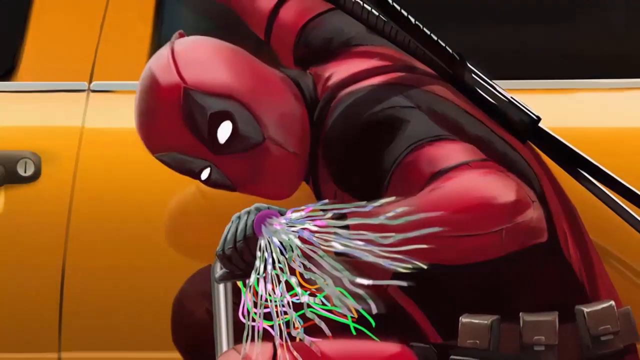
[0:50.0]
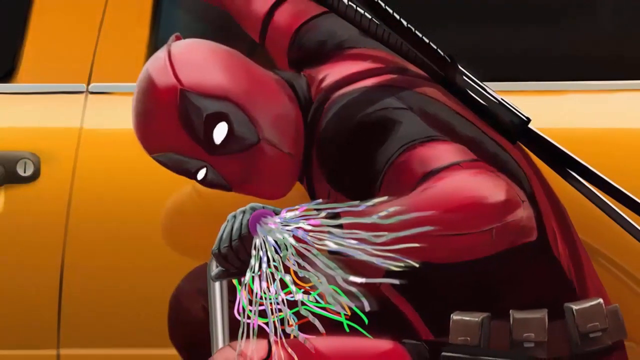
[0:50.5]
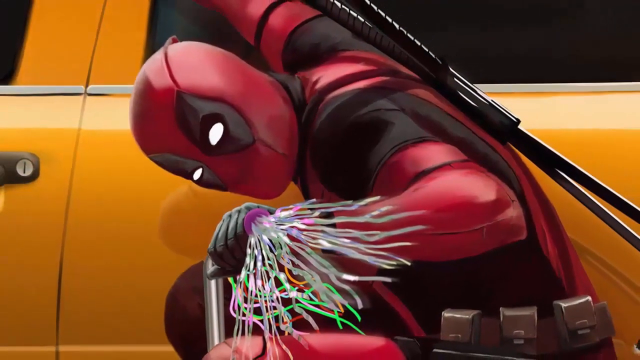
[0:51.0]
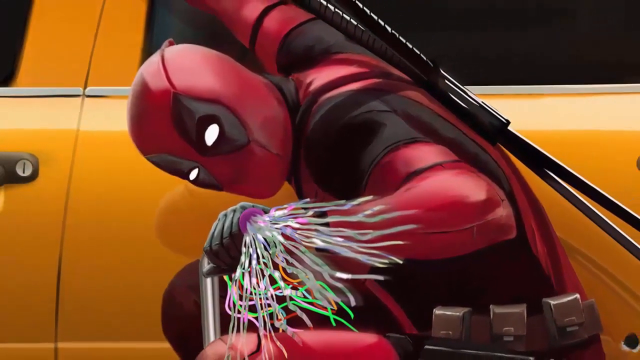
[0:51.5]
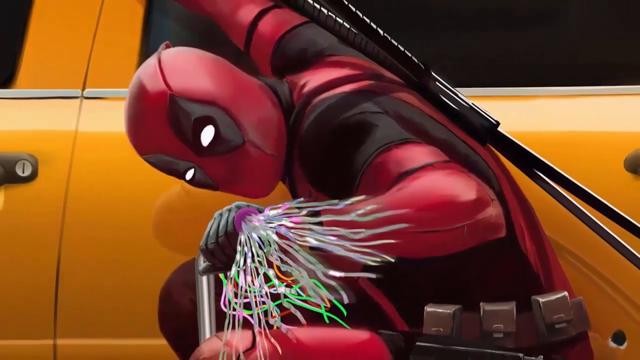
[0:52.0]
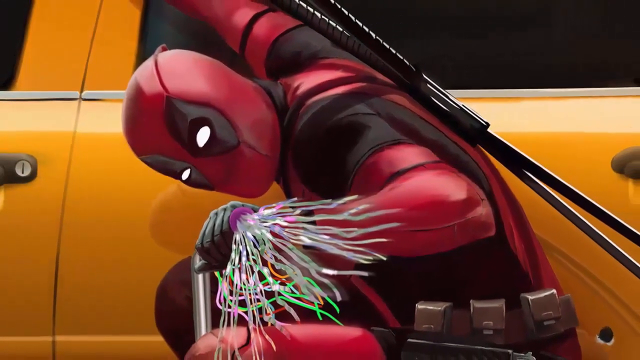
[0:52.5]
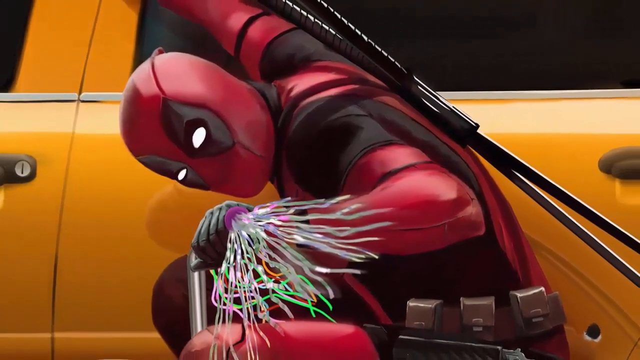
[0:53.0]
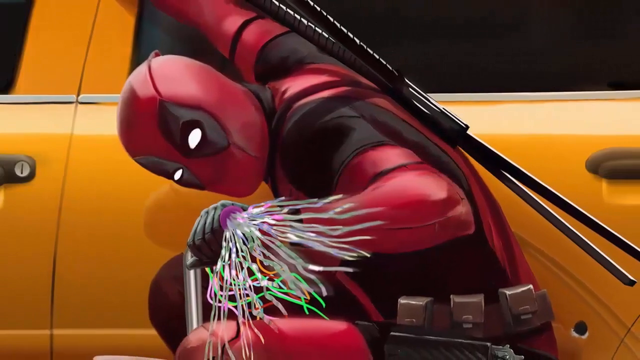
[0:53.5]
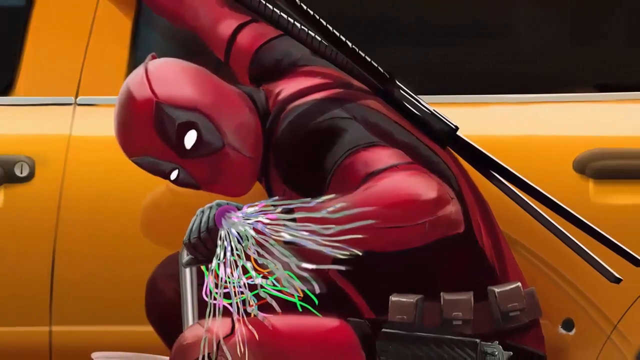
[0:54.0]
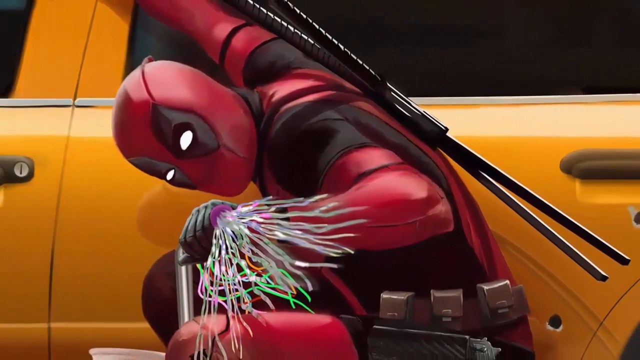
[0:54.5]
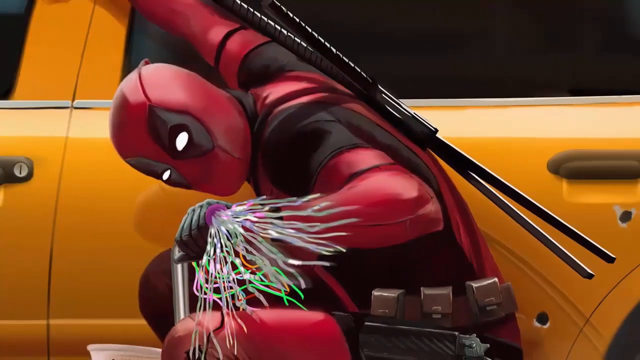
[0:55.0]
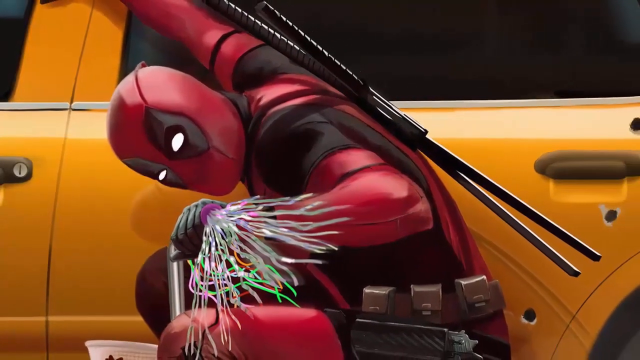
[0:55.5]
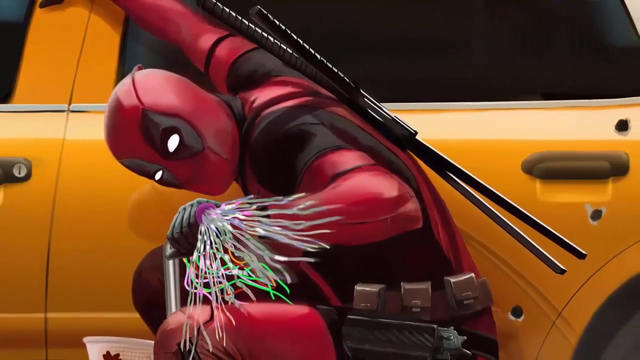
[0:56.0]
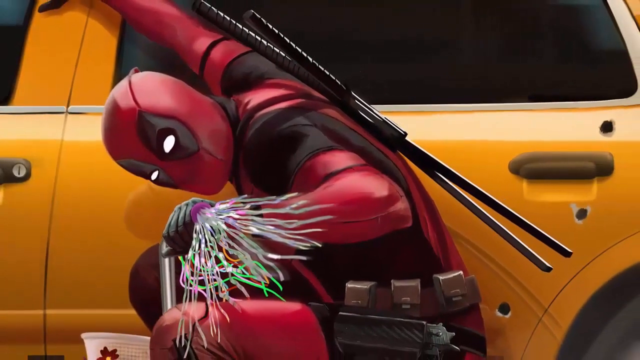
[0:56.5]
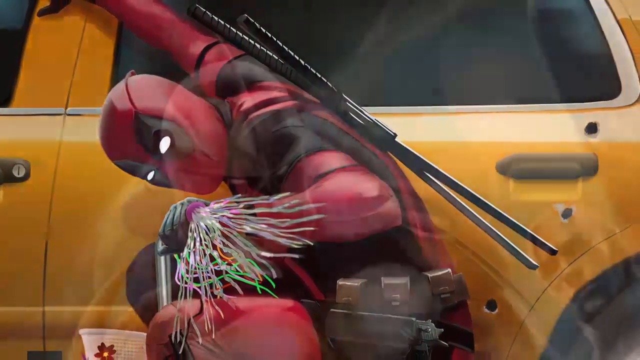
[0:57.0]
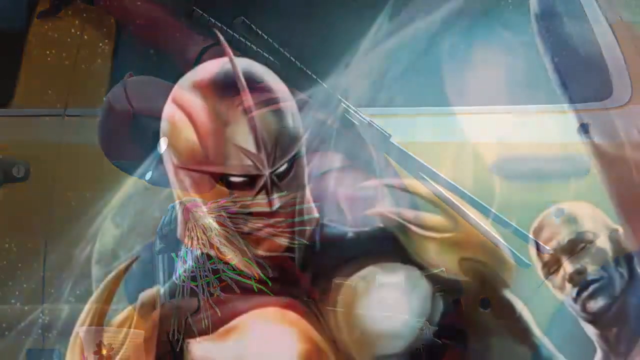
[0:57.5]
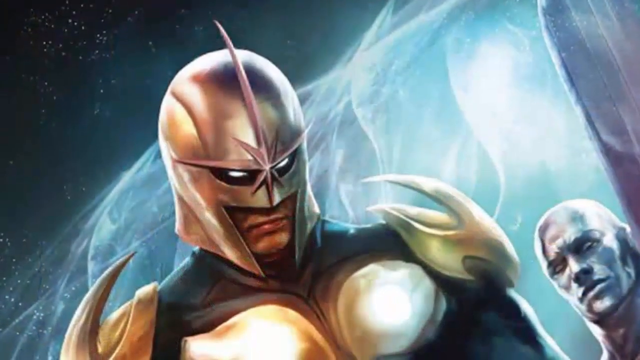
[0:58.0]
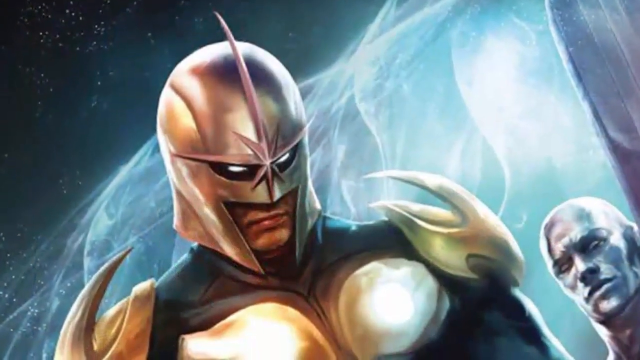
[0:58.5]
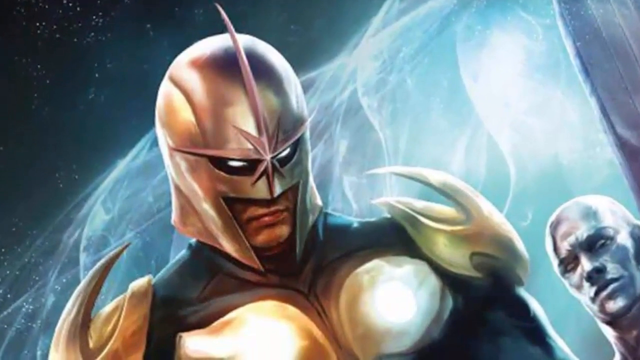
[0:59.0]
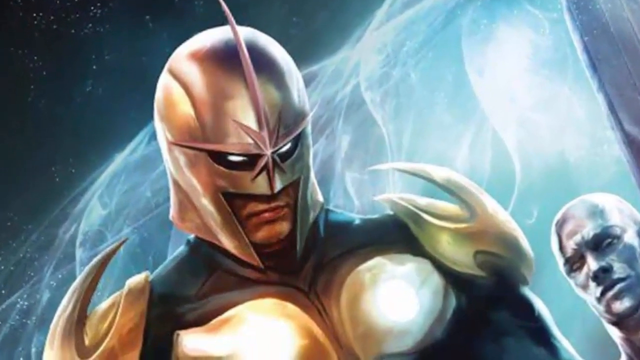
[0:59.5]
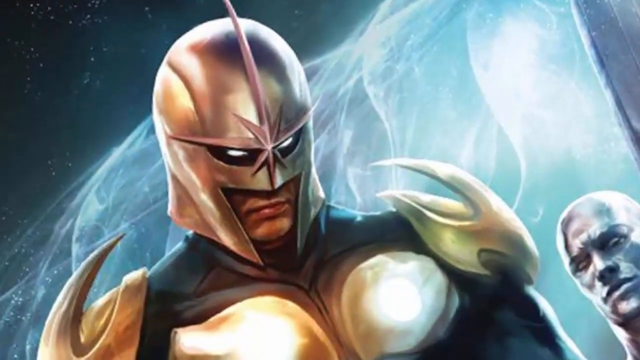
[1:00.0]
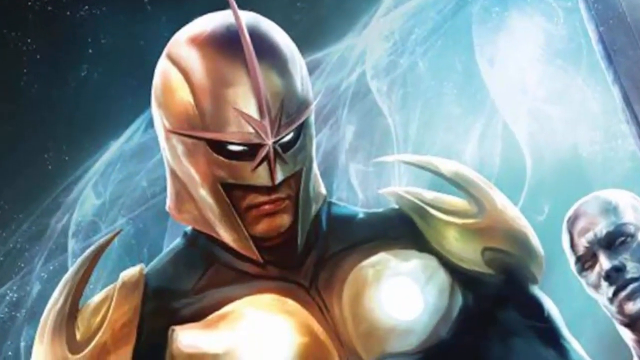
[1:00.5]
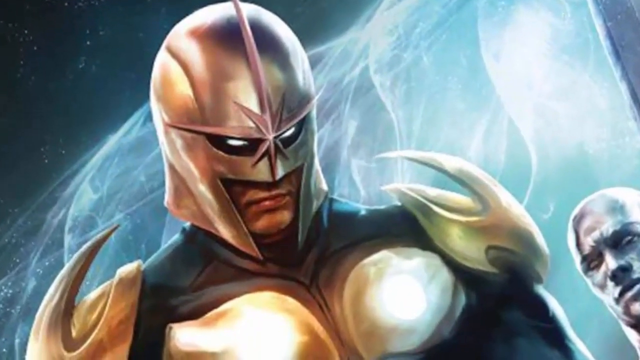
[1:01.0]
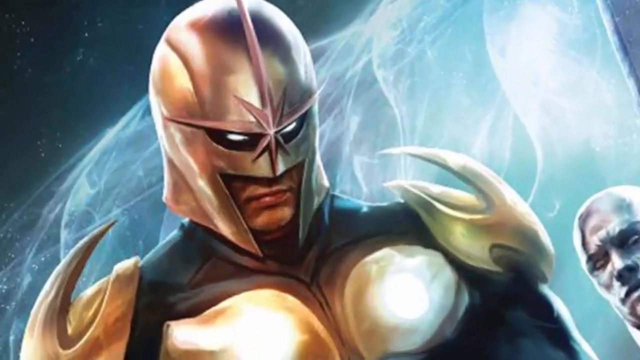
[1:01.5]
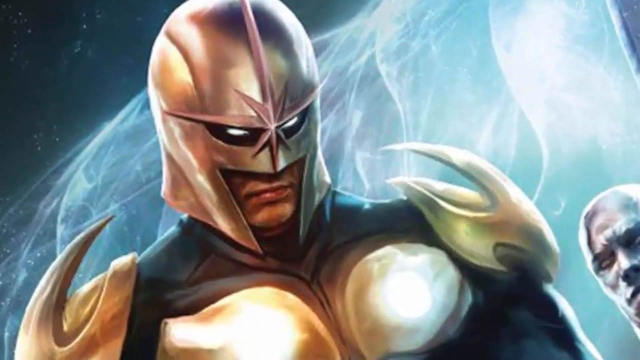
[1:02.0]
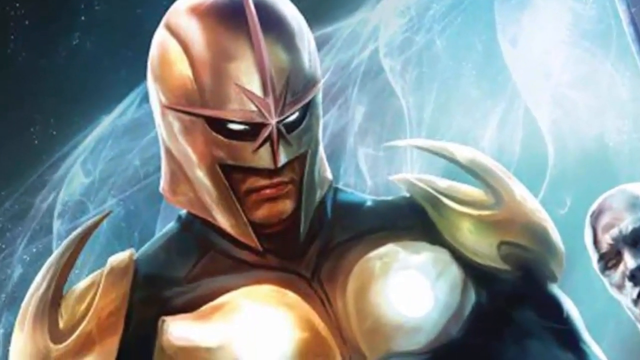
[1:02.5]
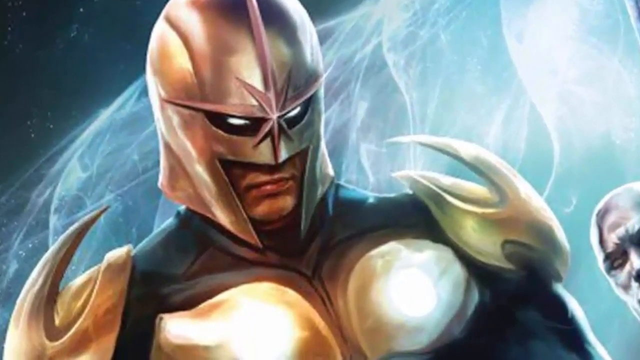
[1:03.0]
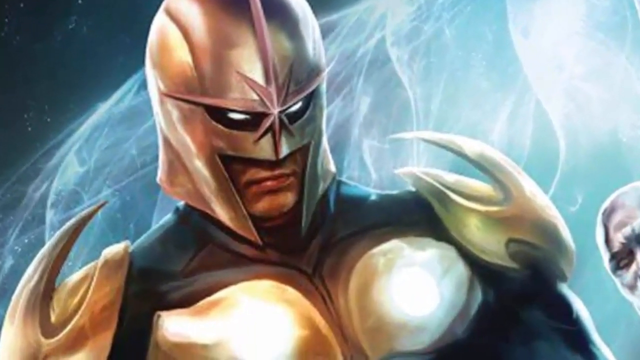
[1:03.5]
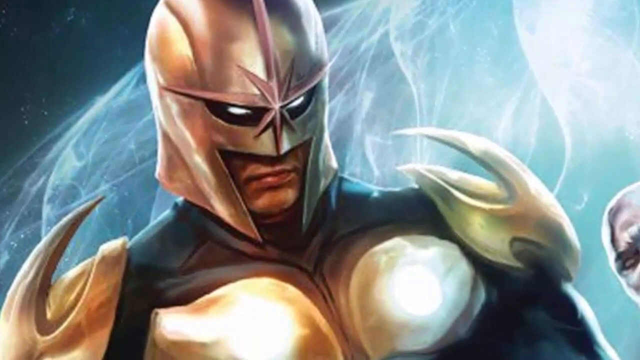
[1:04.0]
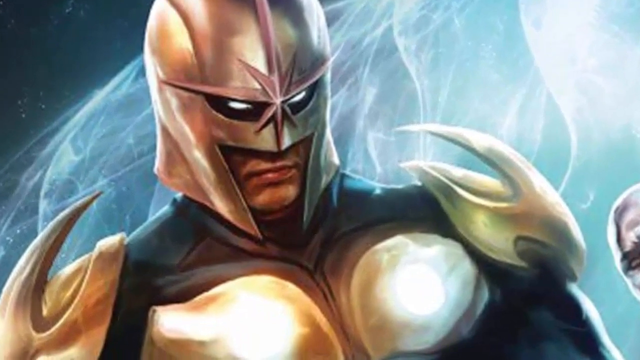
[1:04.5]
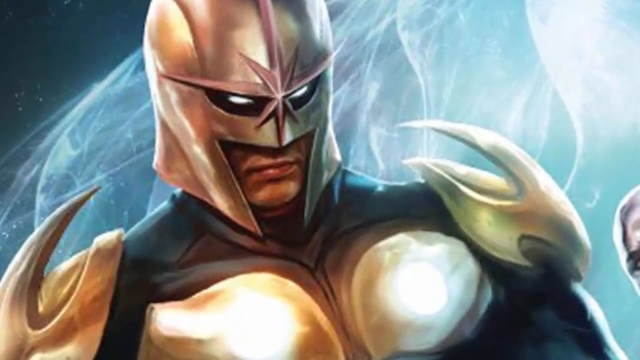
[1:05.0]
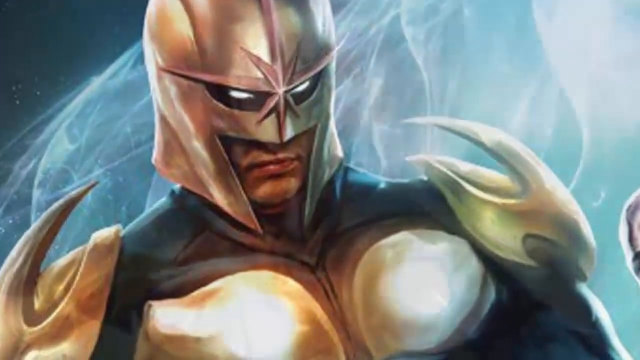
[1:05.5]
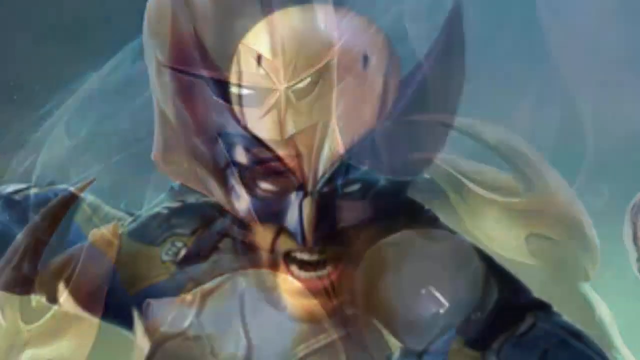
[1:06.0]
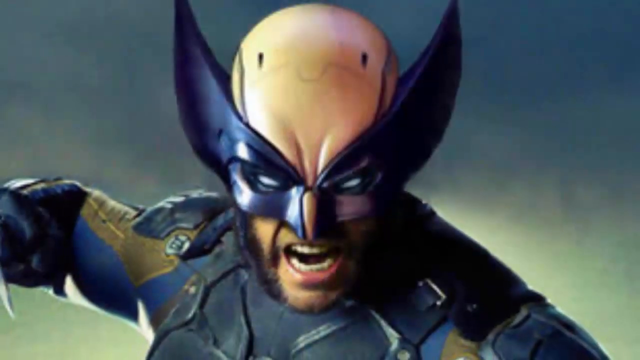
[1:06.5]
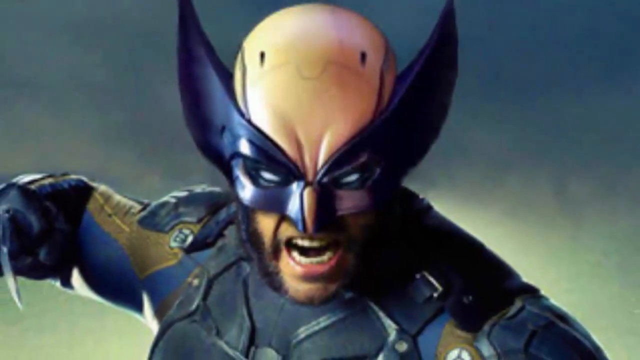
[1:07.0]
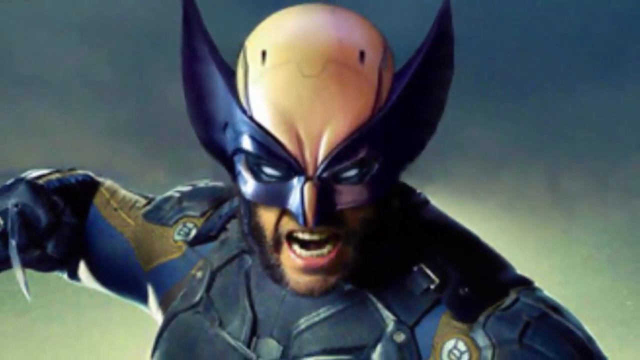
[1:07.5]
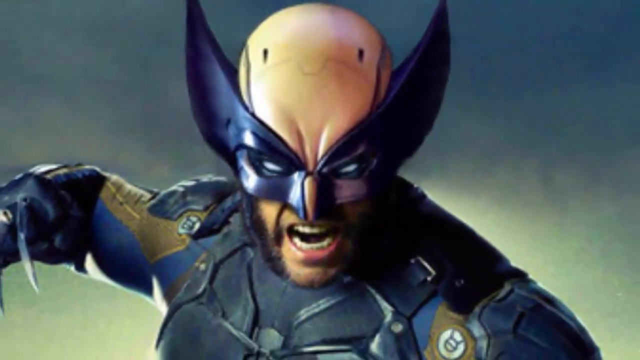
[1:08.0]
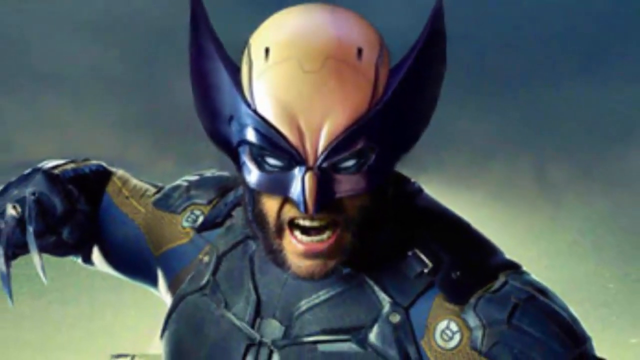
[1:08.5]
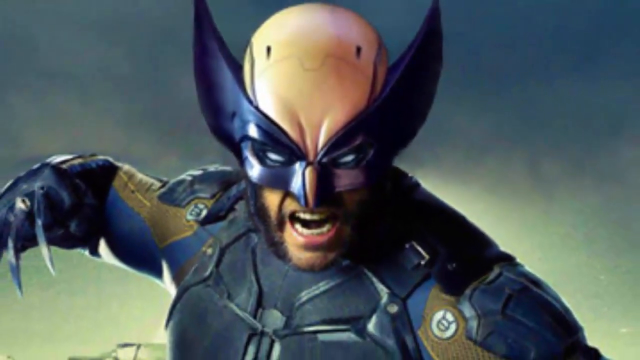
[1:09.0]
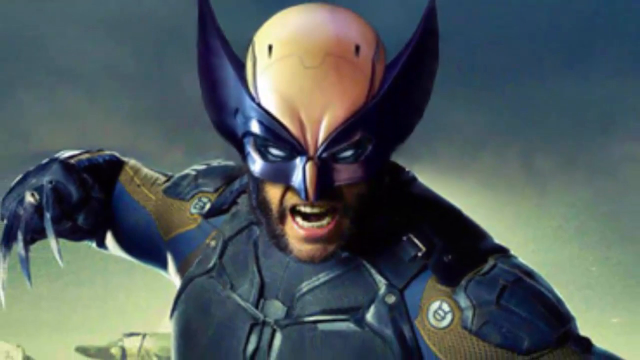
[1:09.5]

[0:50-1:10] Deadpool kneels next to a yellow cab, holding some type of hot-wire electrical wire, with his swords on his back. The view pulls out further and further until he is in full view. The video then moves to a superhero with another superhero in the back. The background looks like a galaxy with stars and some type of bright, flowing light behind it. This man has a metal helmet with a star in the middle. Next is Wolverine with his claws out; he looks very angry and seems to be attacking something. He stands in a kind of grayish, dark scene with nothing else in it. The screen fades from dark gray to a very light color, and he wears his traditional suit of armor.